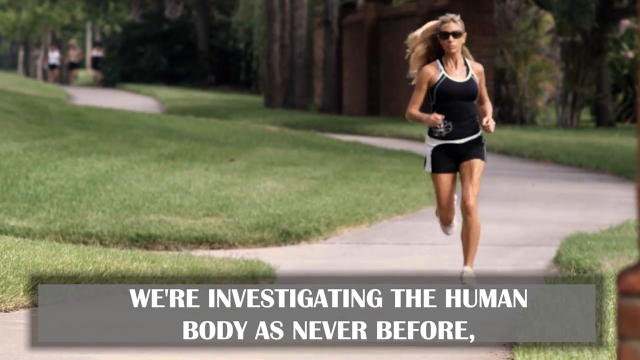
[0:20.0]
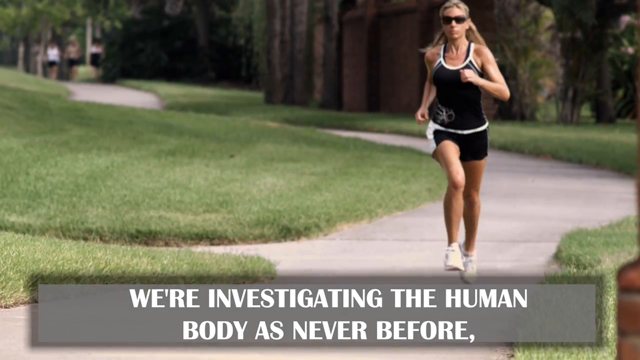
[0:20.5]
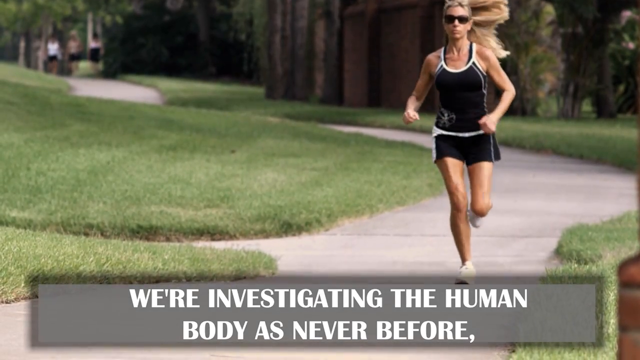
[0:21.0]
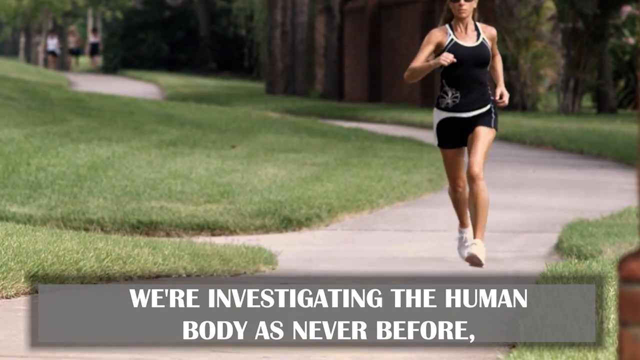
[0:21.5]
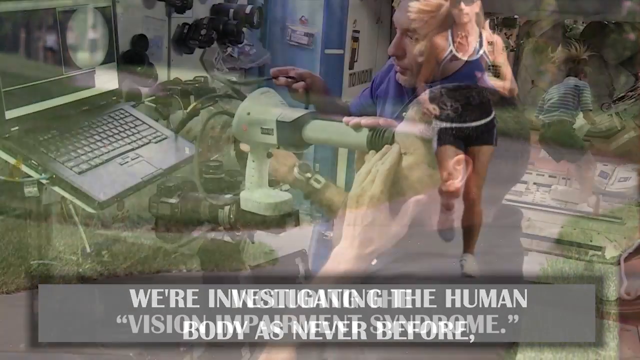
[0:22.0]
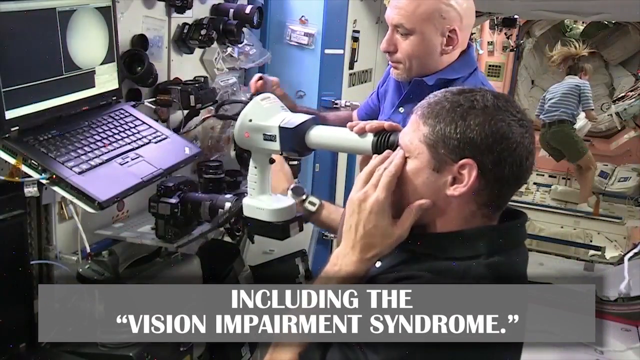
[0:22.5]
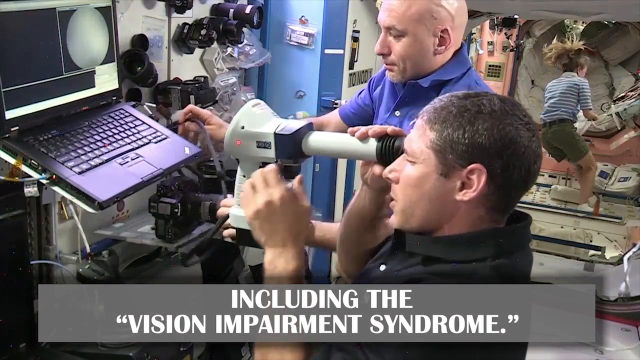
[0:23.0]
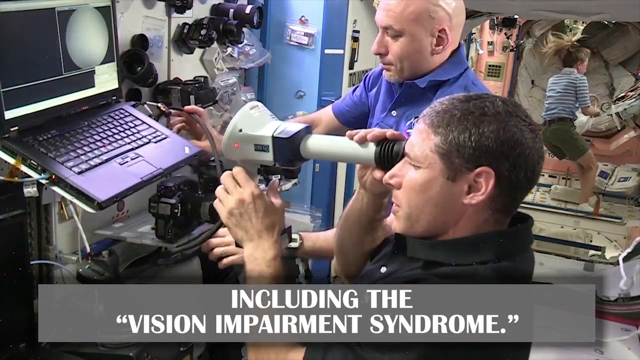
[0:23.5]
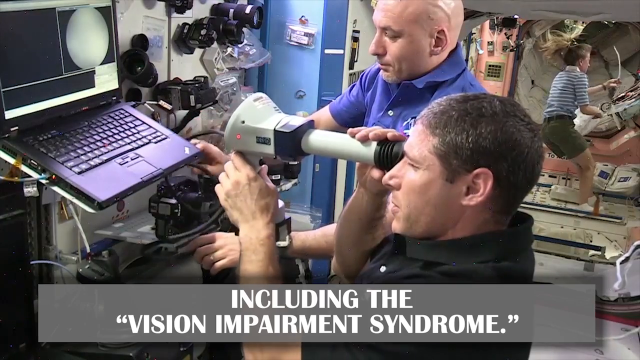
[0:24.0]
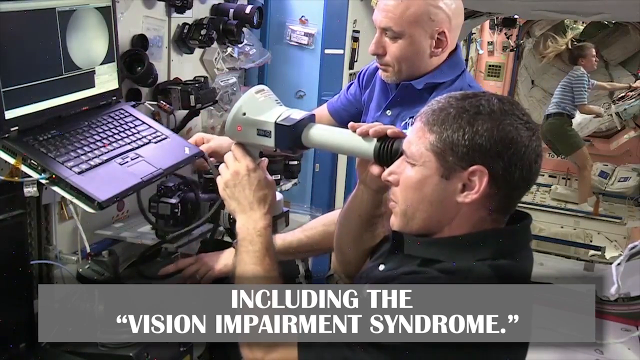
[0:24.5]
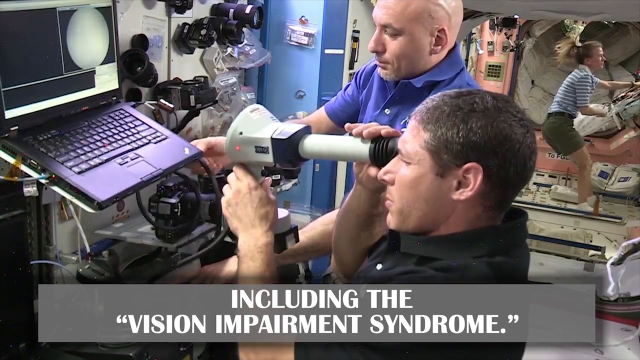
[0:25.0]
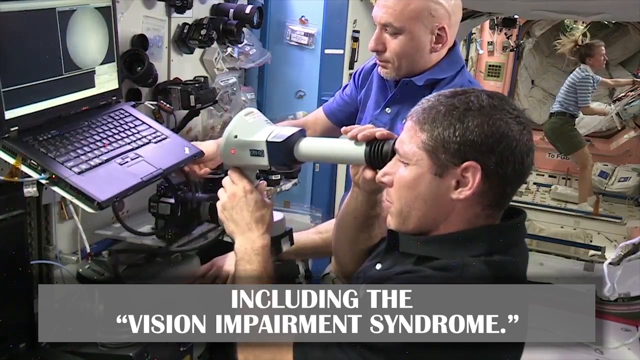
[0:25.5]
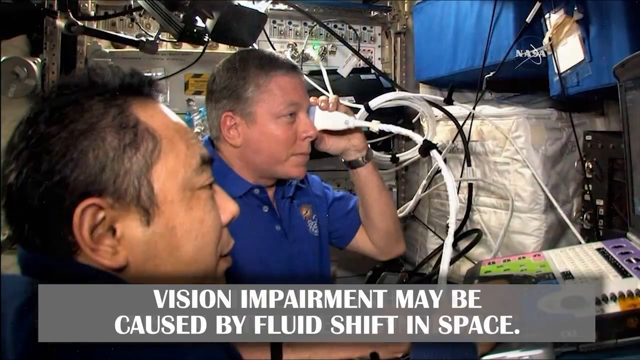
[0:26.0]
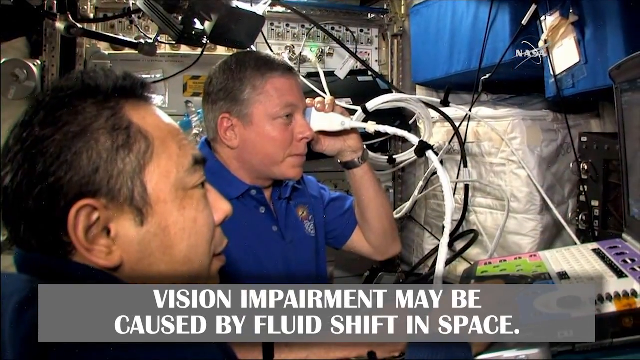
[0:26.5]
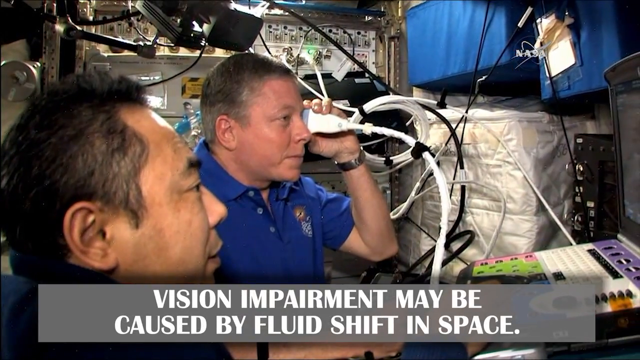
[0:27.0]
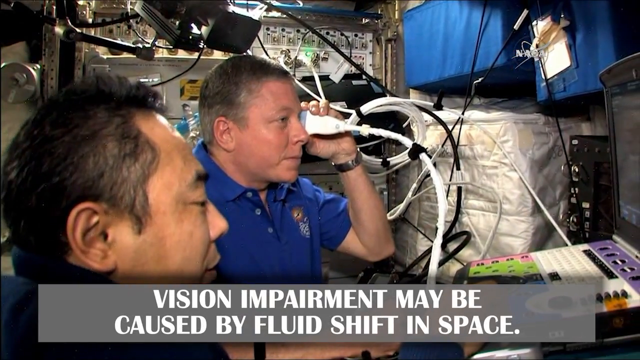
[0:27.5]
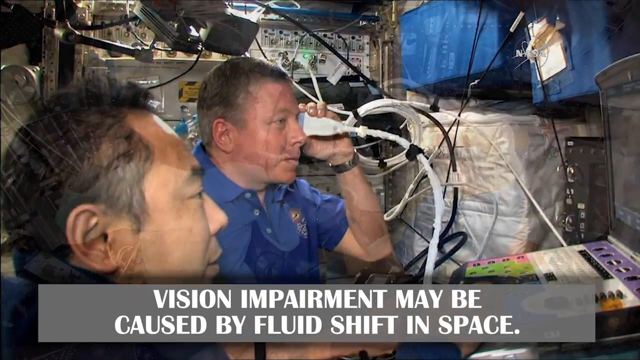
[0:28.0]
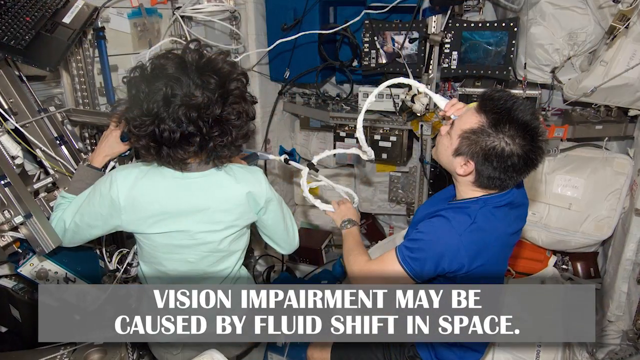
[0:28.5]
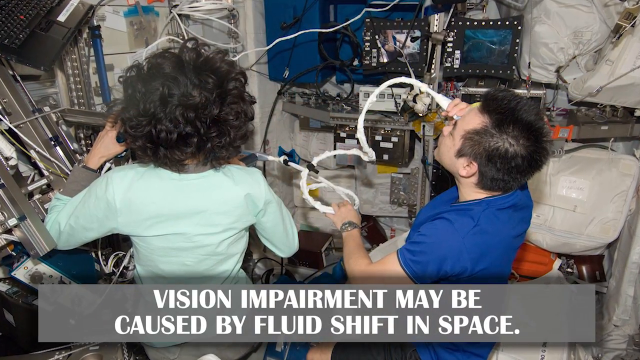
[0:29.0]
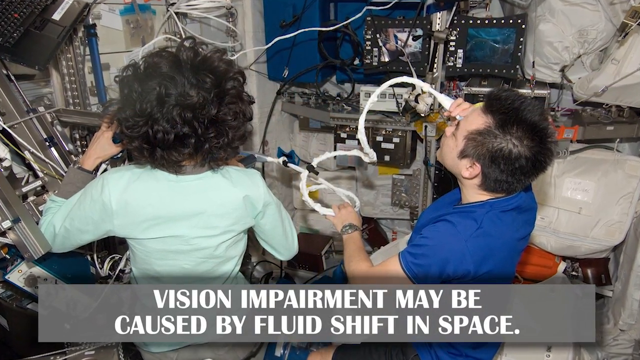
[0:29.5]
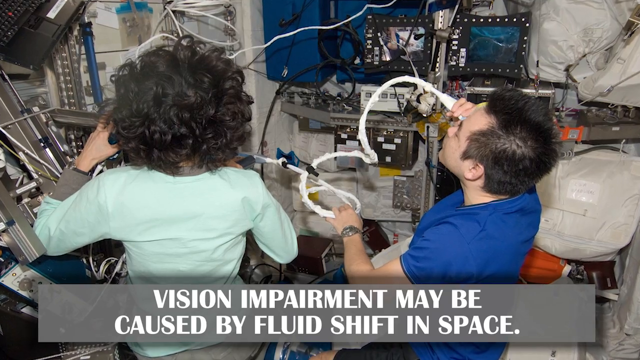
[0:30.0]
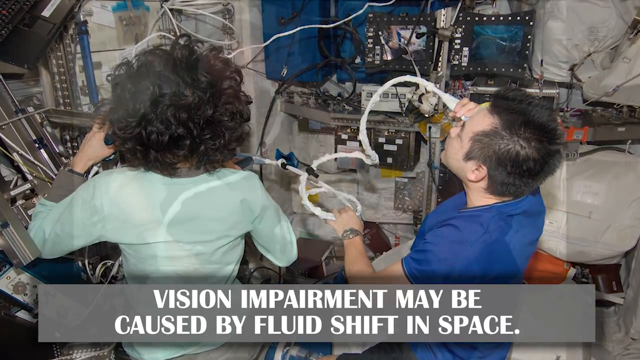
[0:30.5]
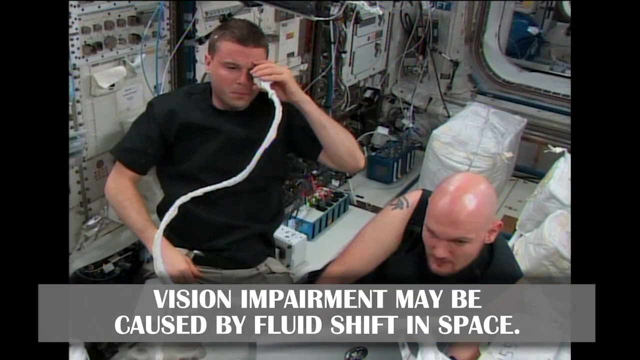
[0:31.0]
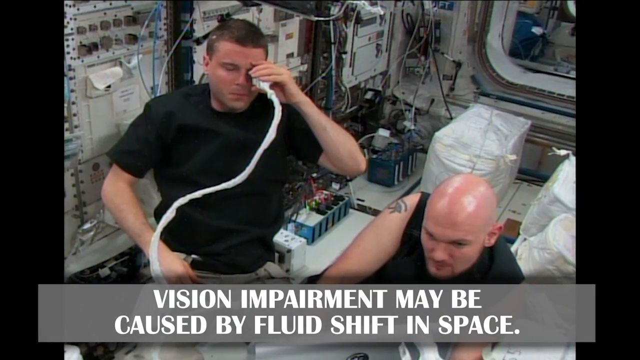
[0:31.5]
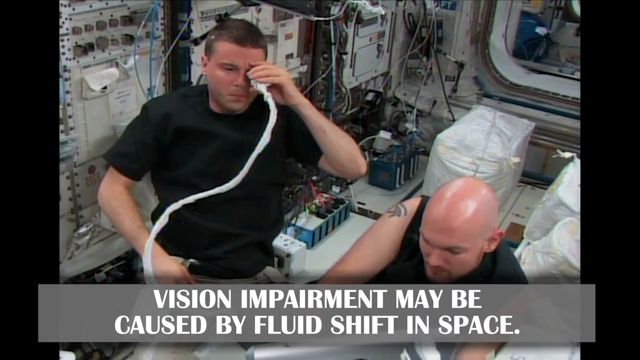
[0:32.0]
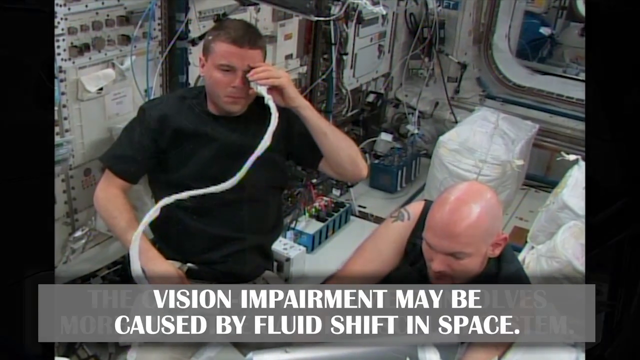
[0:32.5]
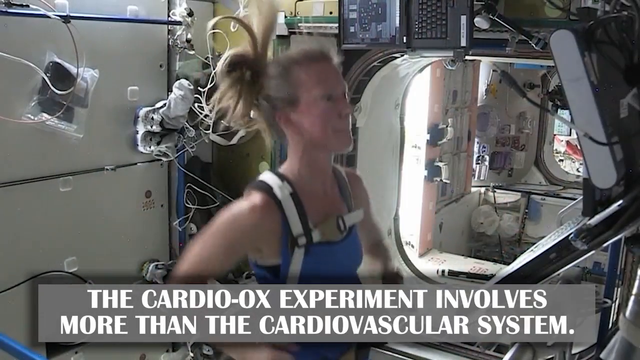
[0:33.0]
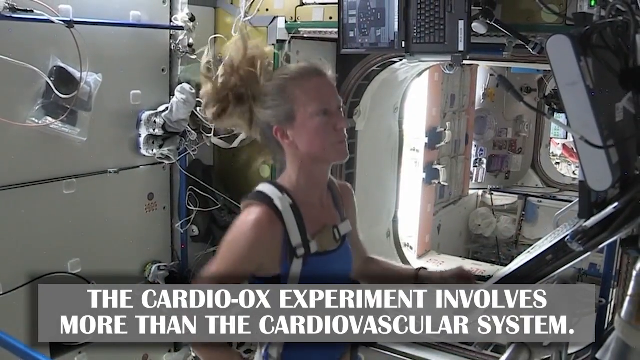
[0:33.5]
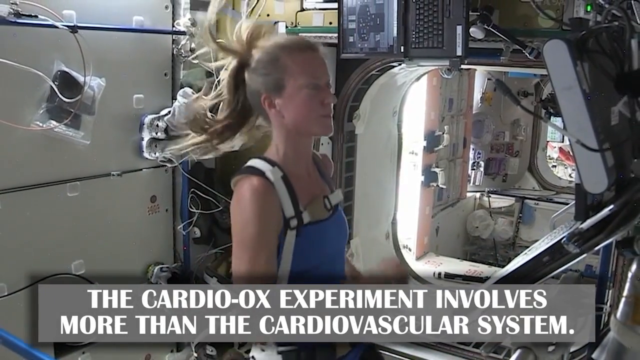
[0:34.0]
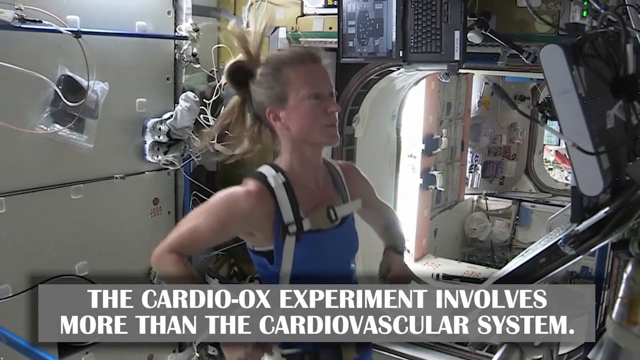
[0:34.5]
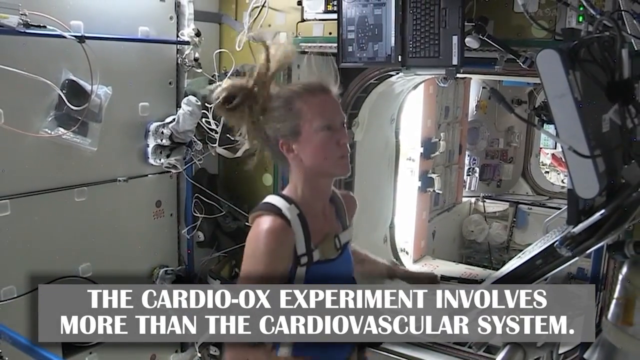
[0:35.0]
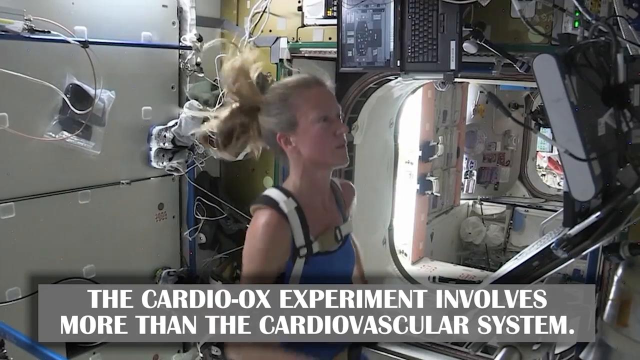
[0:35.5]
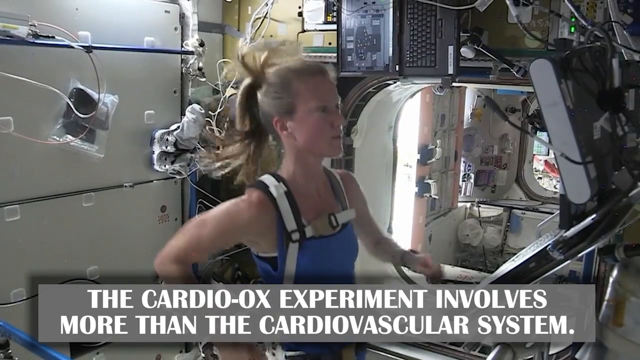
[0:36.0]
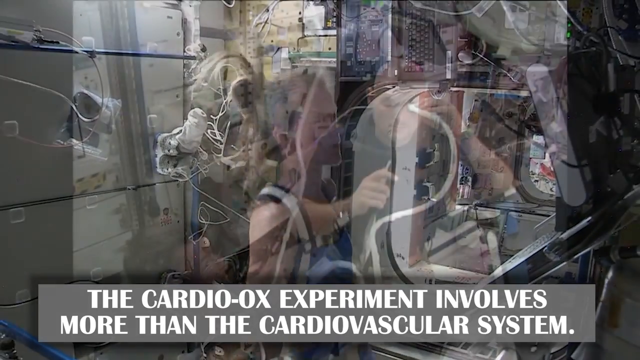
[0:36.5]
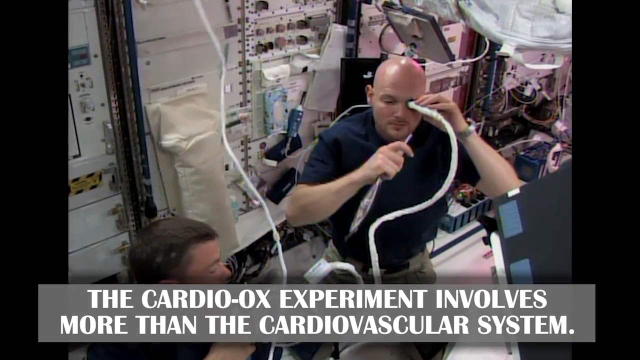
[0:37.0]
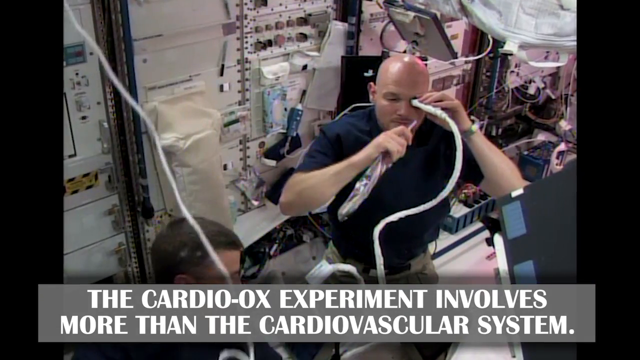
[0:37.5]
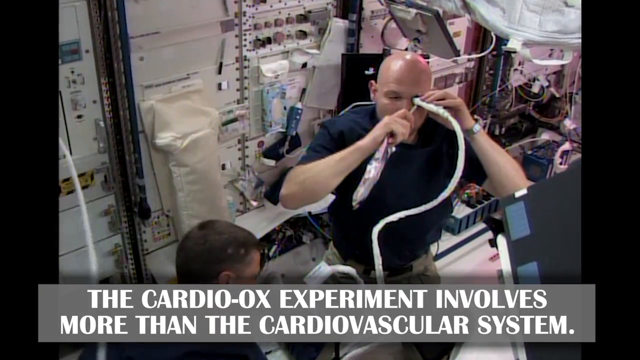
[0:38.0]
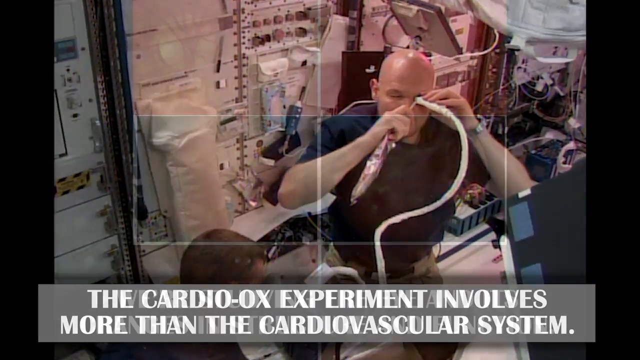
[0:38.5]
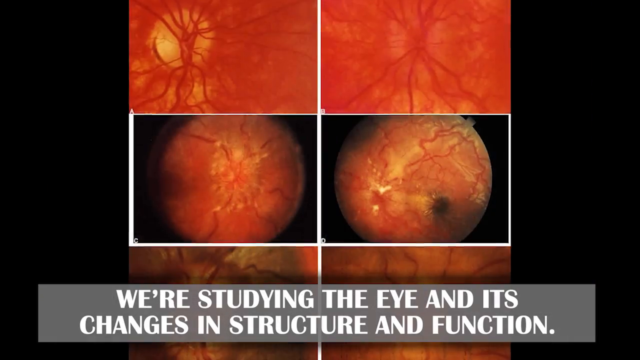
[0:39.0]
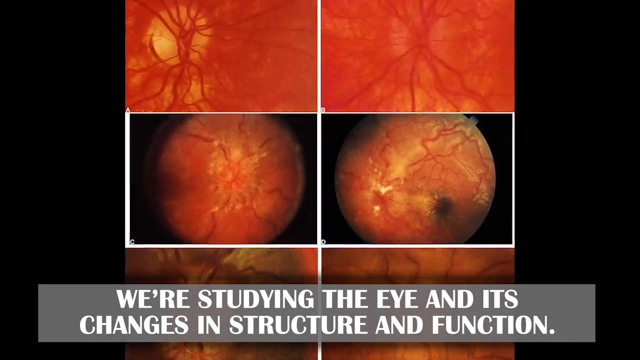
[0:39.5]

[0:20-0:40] A woman with long blonde hair jogs down a sidewalk. She wears white shoes, black shorts, a black tank top and sunglasses, and has something white tied around her waist. Big patches of grass are around the sidewalk, with some trees in the background. Gray text along the bottom reads "we're investigating the human body as never before," outlined by a darker gray text box. The video changes to three people: in the background a woman appears to be in an anti-gravity chamber, and two men look at a computer screen. One of the men, closest to the camera, is sitting down and holding up what looks like a very large microscope, moving it all around while looking at the computer screen. The image fades into a new shot of the two men working at the computer; the man furthest from the camera apparently wears a blue shirt and holds up something white that looks like a computer cable of some sort, while the man closest to the screen browses up and down the computer screen in front of them. Next is a picture of a man and a woman. Only the back of the woman's head is visible; she has dark curly hair and wears a robin's egg blue long-sleeve top. The man, to her right, wears a blue shirt and looks into something that looks like a long white computer cord. All around them are all sorts of gadgets and big white packages that look like they could be blankets inside a big bag. Gray text along the bottom reads "vision impairment may be caused by fluid shift in space," outlined in a darker gray box. That fades into a shot of a man on the left side of the screen in a black shirt, holding up what looks like a long computer cord, apparently used to check the eyes, to his left eye with his left hand. He is standing, and there is a man sitting below him. Next, a woman with long blonde hair jogs on a treadmill inside what looks like a scientific research office, looking at a screen in front of her. She wears a backpack and a blue tank top. Gray text outlined in darker gray along the bottom reads "the Cardio Ox experiment involves more than the cardiovascular system." The video moves to another man standing and holding the white gadget up to his left eye with his left hand, with someone below him looking at him. It then changes to six different images of the inside of the eye on a black screen, with light gray text along the bottom reading "we're studying the eye and its changes in structure and function," outlined by a darker gray text box.